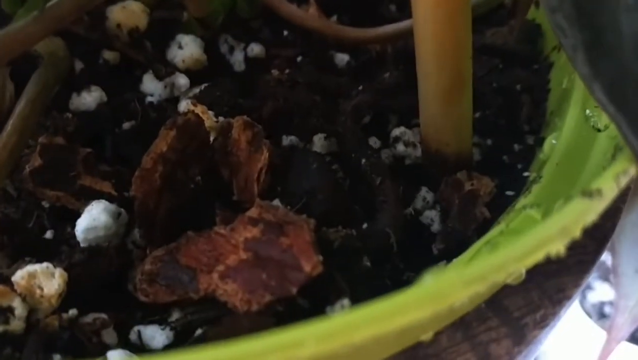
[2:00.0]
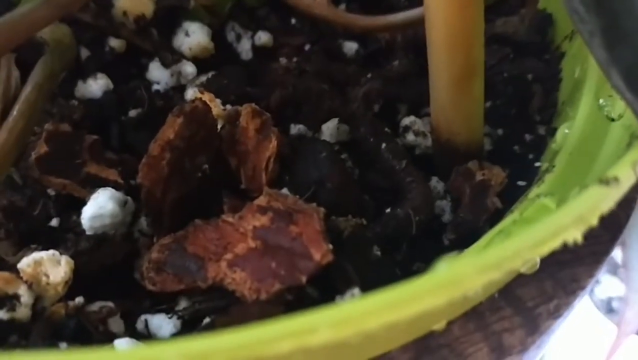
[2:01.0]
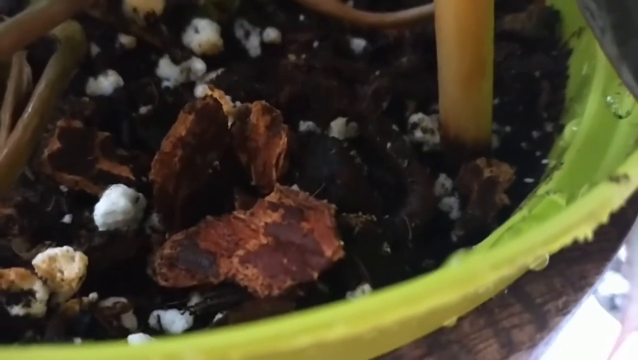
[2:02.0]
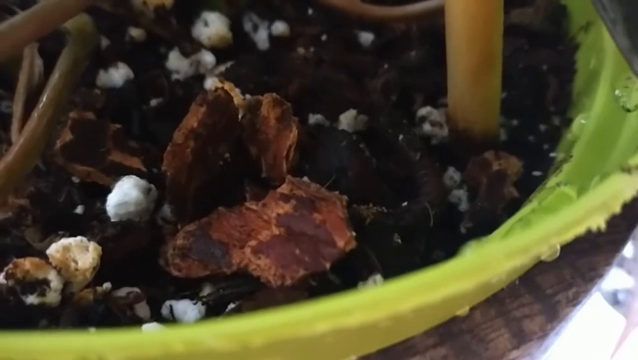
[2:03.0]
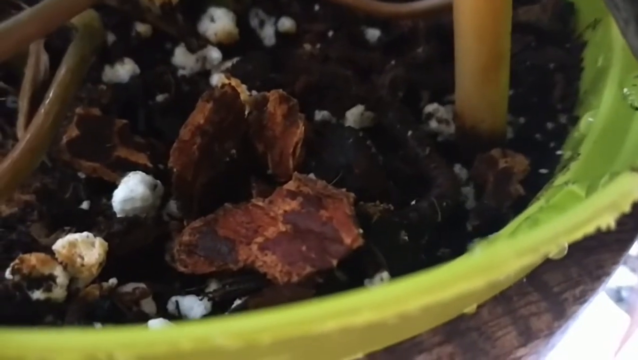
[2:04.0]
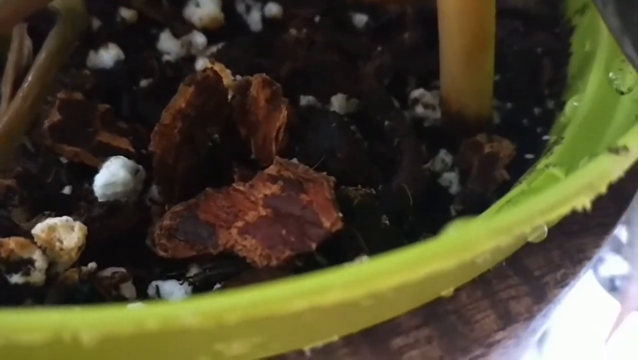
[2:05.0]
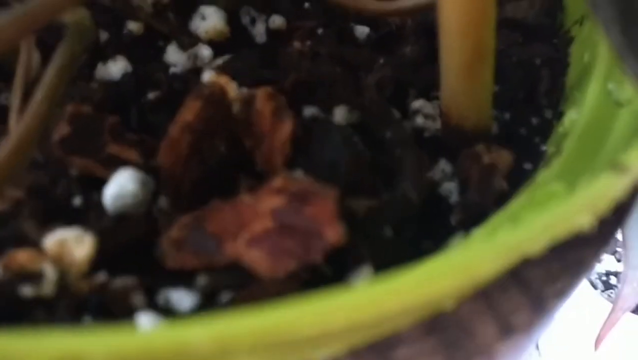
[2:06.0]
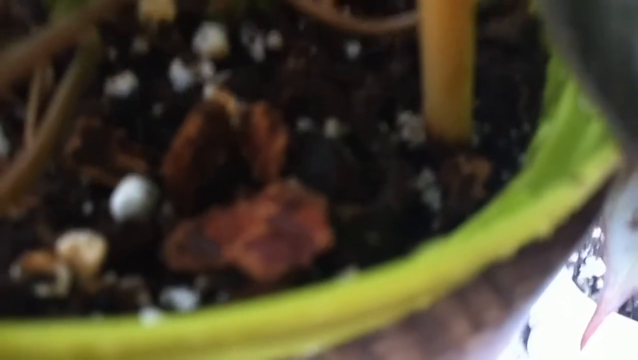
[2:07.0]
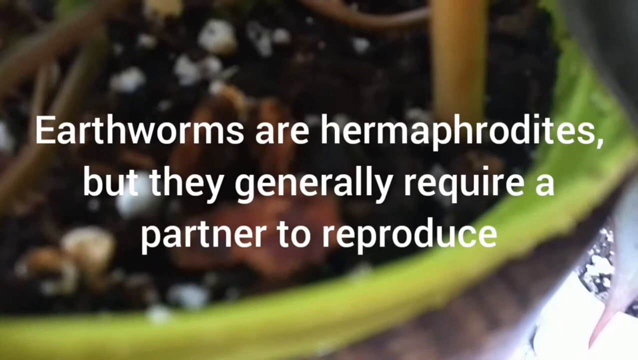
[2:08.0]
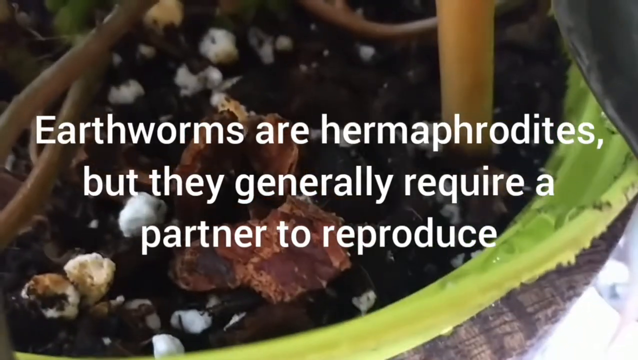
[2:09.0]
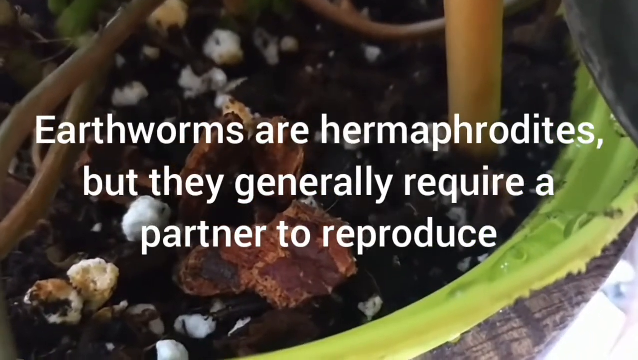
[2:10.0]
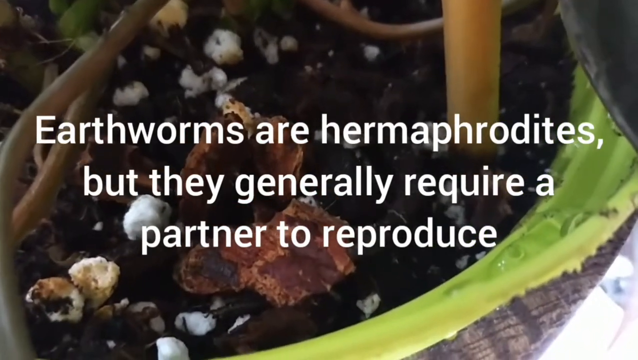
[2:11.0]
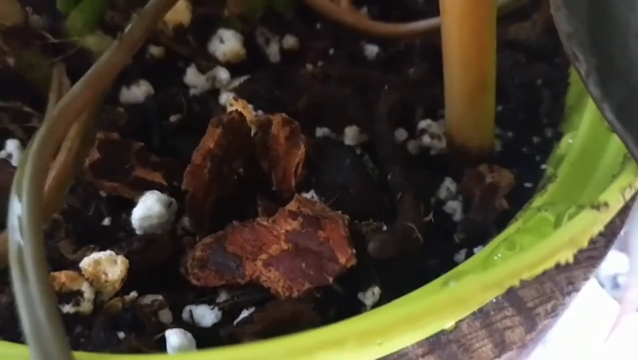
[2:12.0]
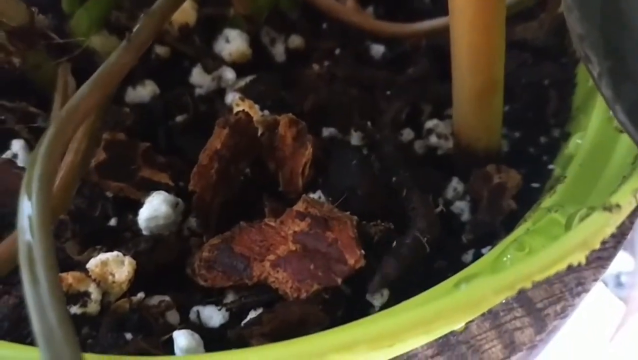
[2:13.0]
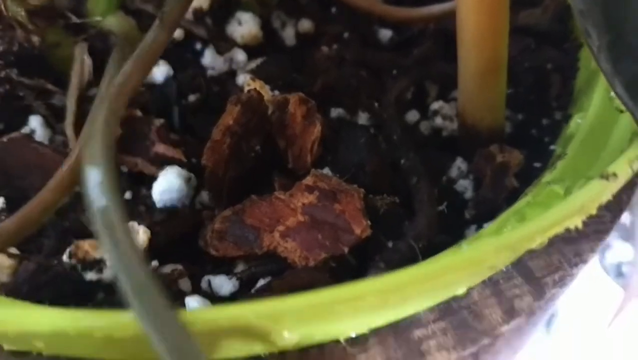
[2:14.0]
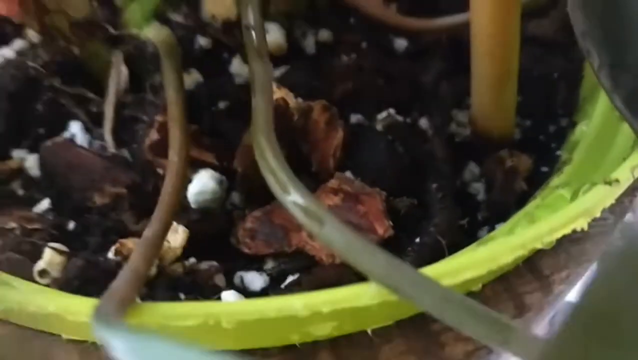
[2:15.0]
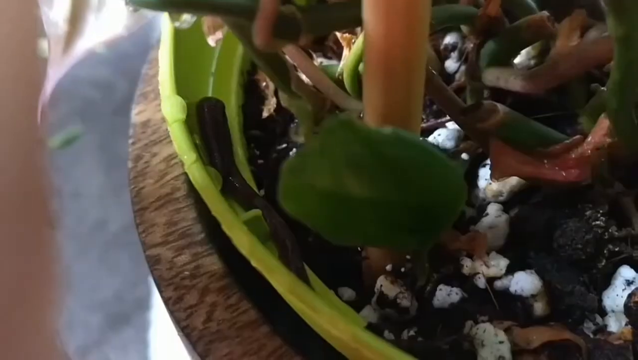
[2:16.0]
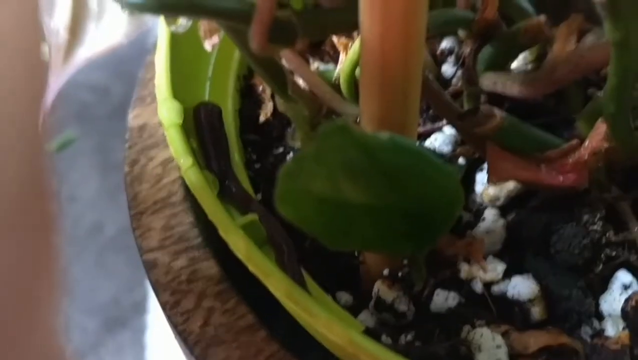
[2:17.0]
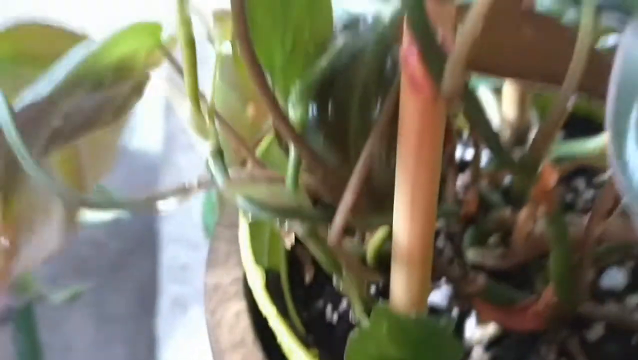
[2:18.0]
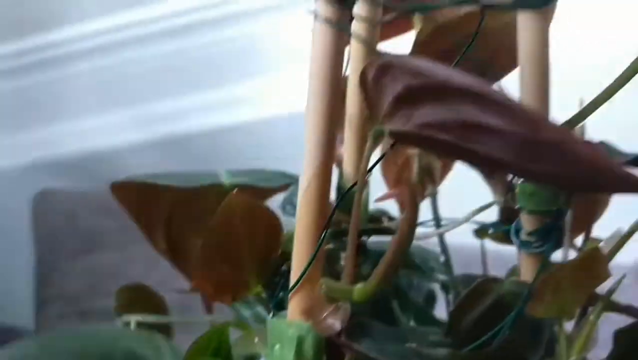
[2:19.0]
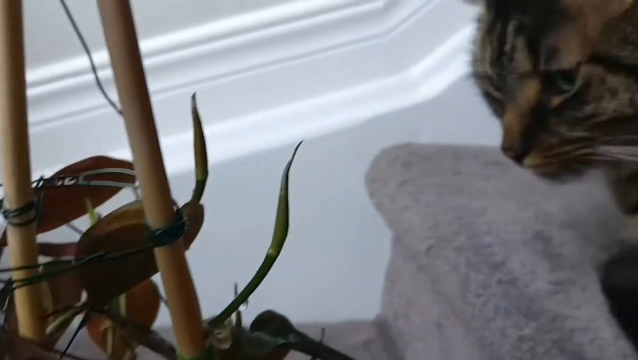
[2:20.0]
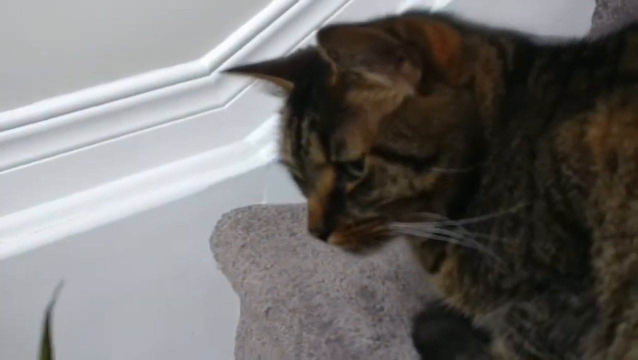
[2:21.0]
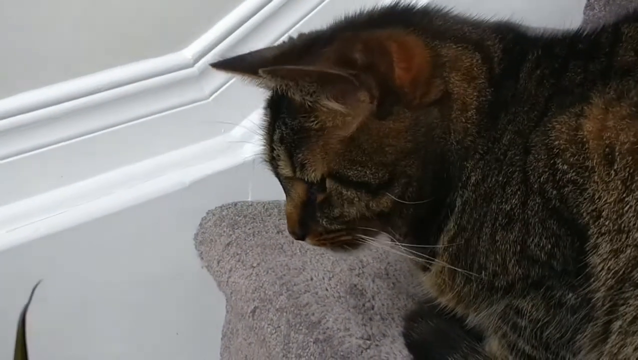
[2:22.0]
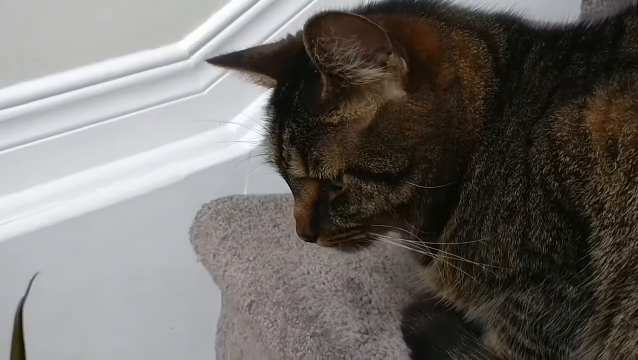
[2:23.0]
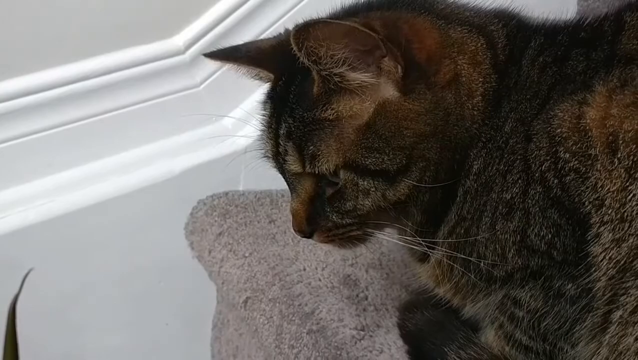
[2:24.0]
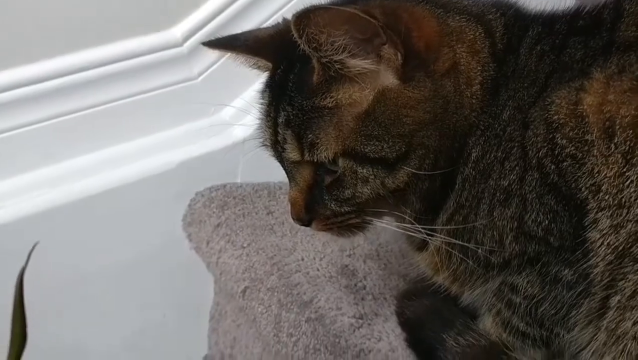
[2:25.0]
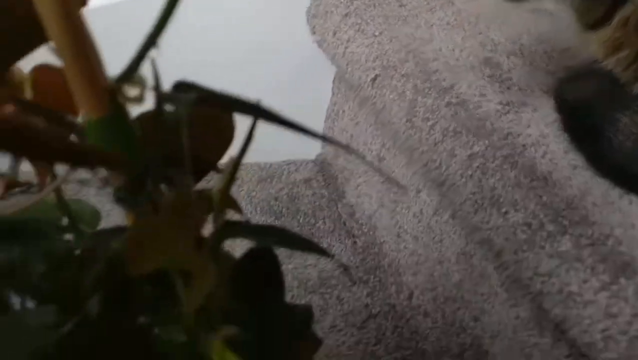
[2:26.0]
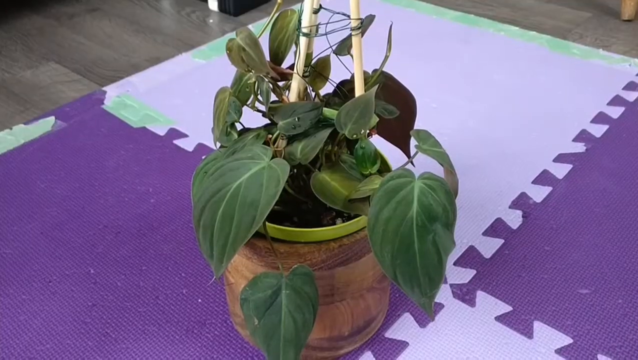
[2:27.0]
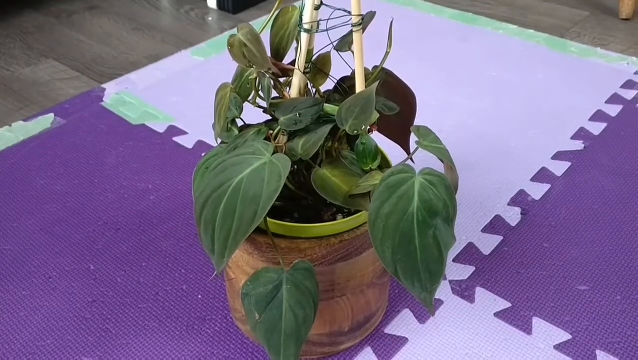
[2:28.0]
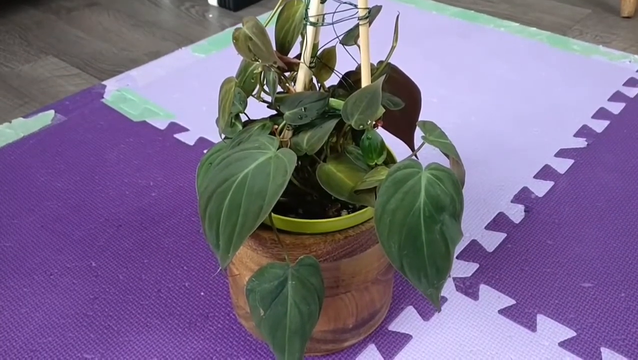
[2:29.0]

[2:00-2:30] The camera is zoomed in on a plant in a pot, with dirt and little white round things visible. A black earthworm in the plant is kind of sniffing around. Text appears on screen about earthworms being hermaphrodites that nevertheless need a partner to reproduce, while the worm slithers around in the potted plant. The camera lifts away from the plant and pans right to a tabby cat perched on the stairs next to where the plant is, ears pointed forward. The cat seems focused on the plant, looking down at it as the earthworm moves around. Another shot of the plant follows; it looks like it has been taken outside.